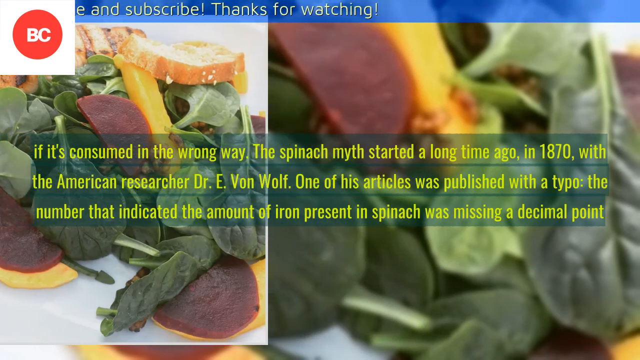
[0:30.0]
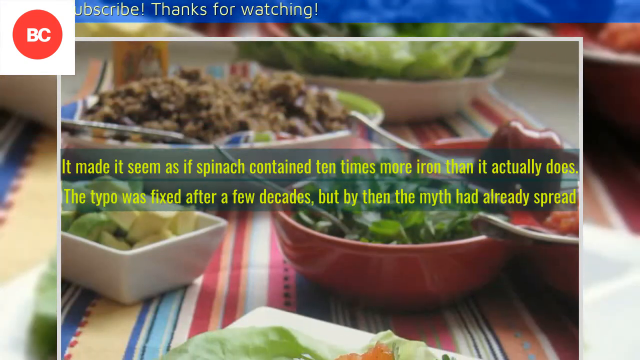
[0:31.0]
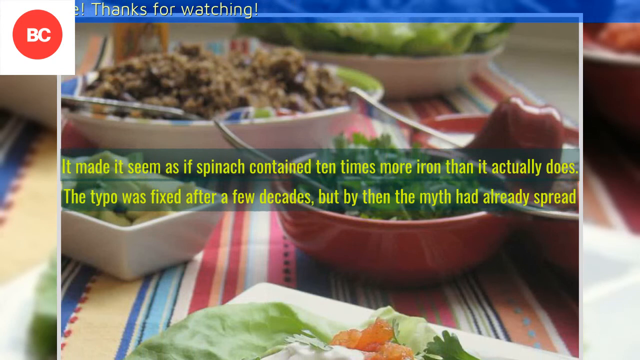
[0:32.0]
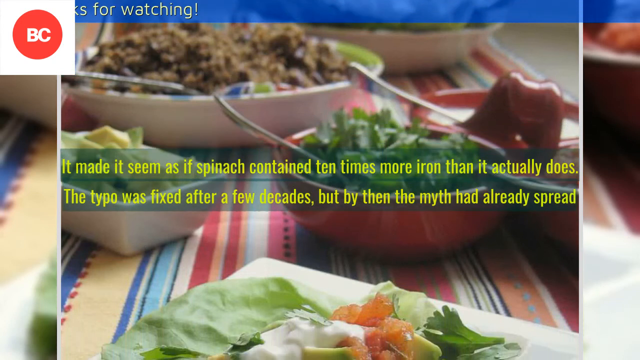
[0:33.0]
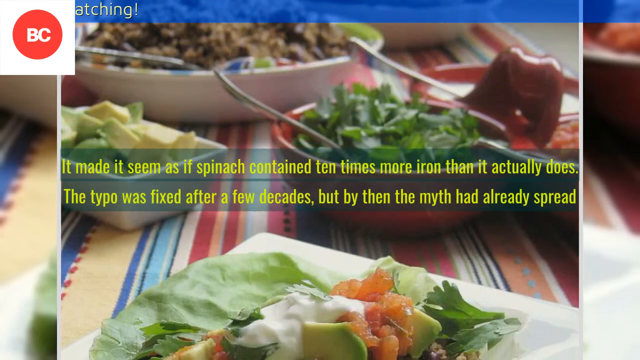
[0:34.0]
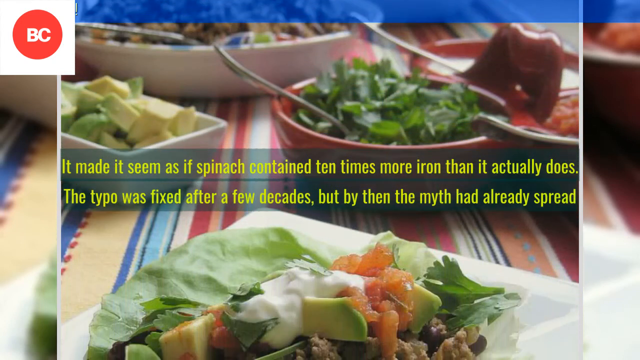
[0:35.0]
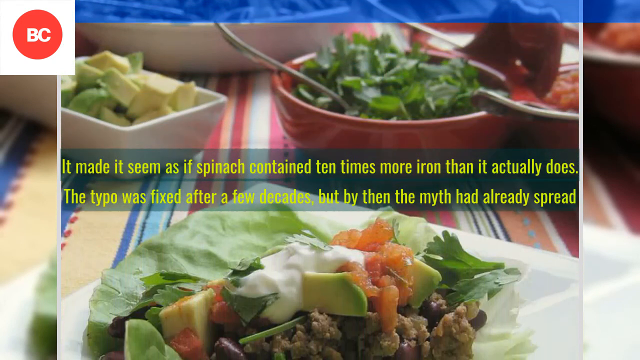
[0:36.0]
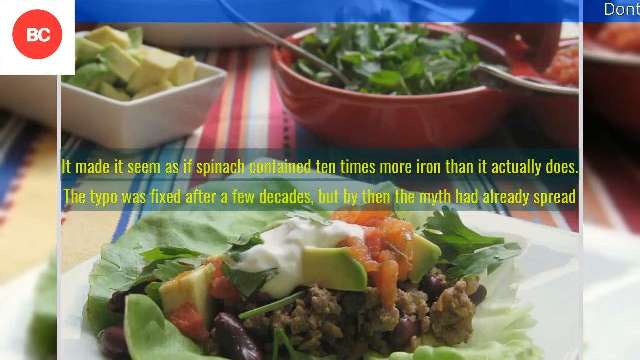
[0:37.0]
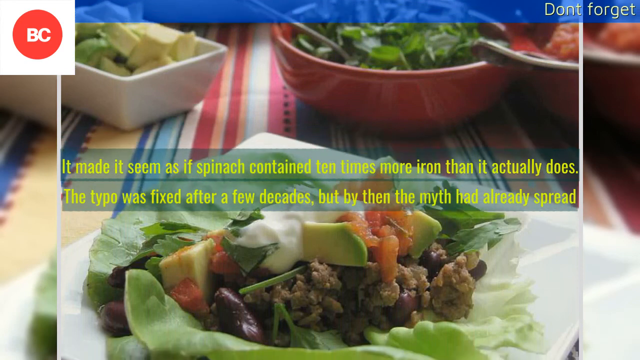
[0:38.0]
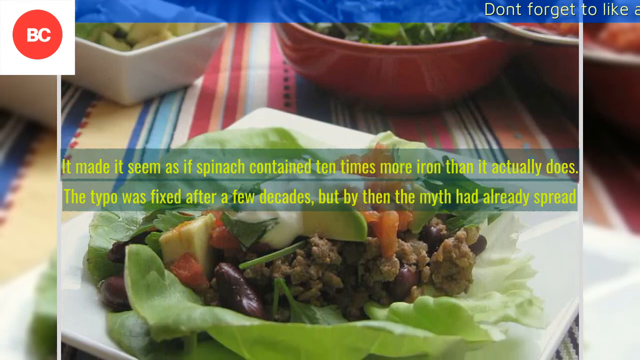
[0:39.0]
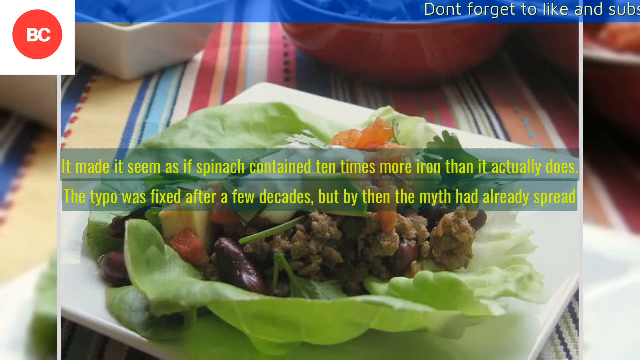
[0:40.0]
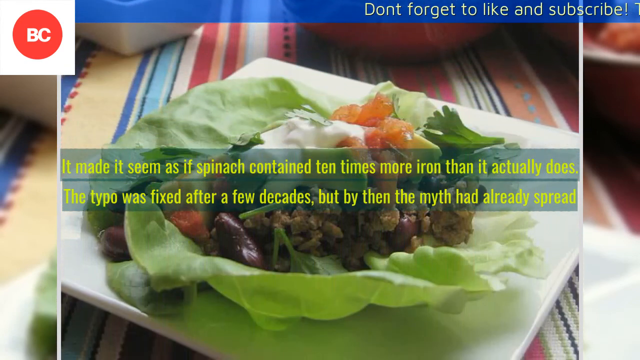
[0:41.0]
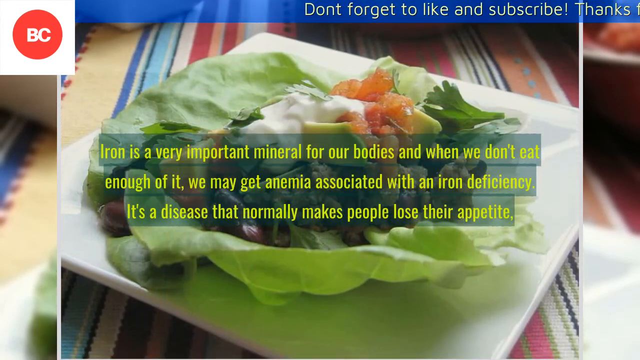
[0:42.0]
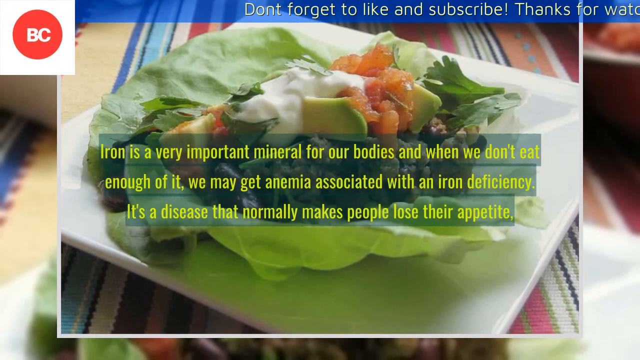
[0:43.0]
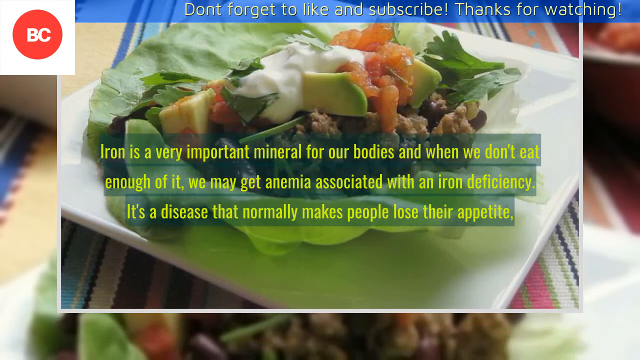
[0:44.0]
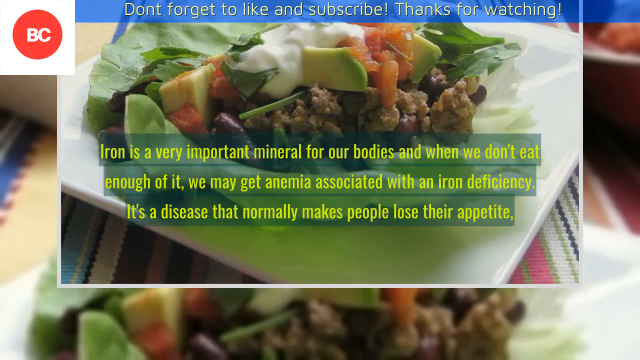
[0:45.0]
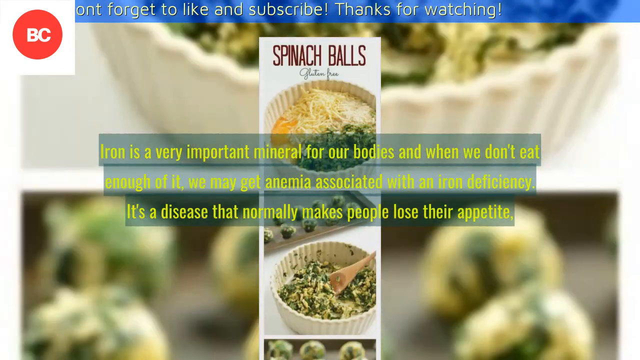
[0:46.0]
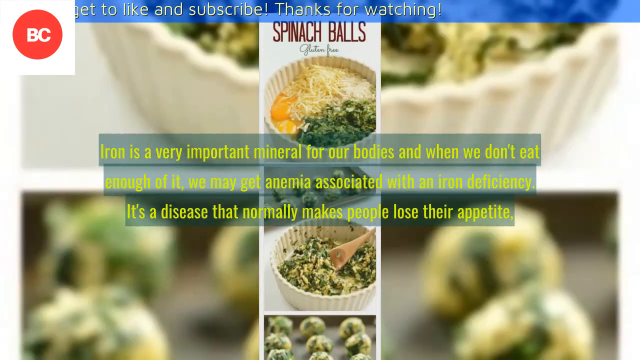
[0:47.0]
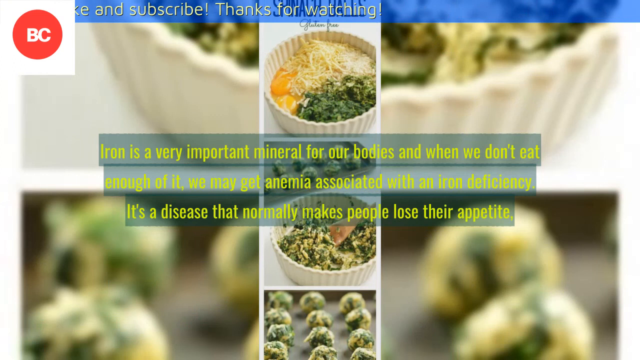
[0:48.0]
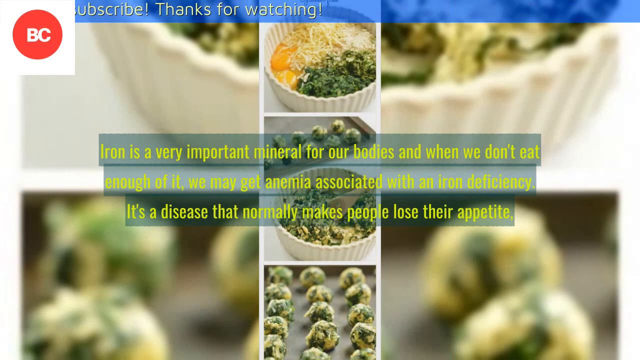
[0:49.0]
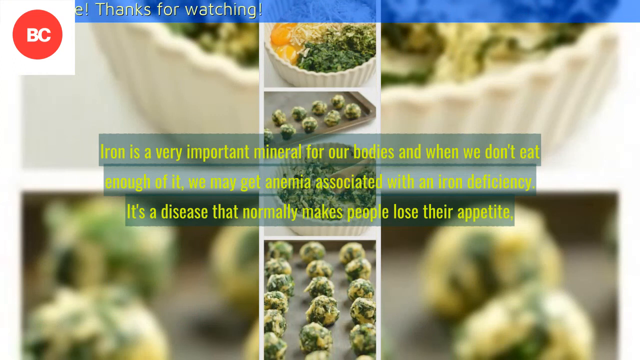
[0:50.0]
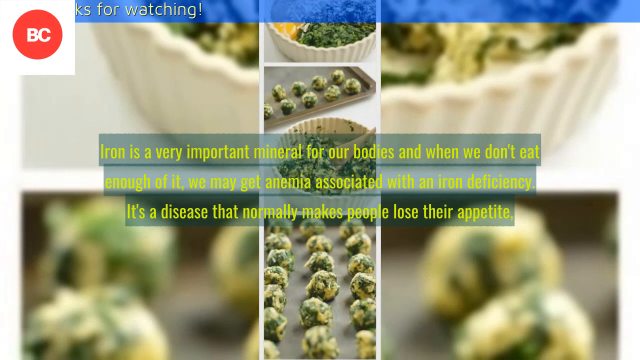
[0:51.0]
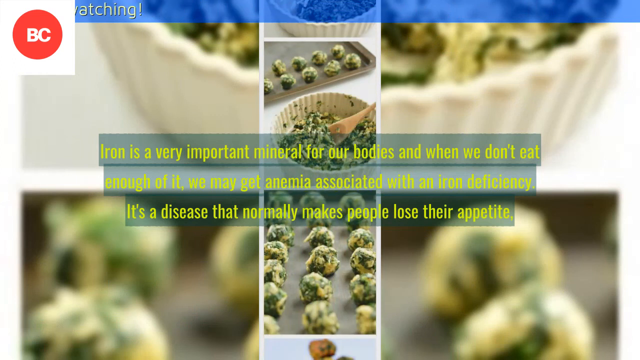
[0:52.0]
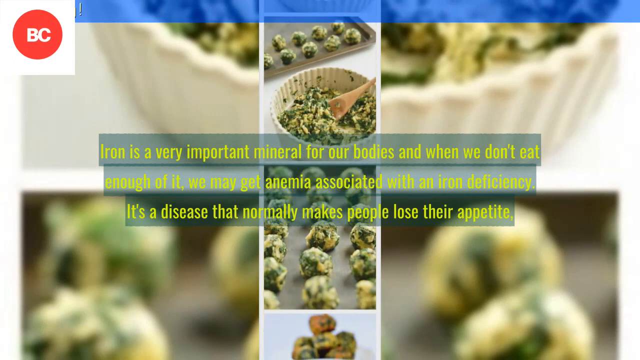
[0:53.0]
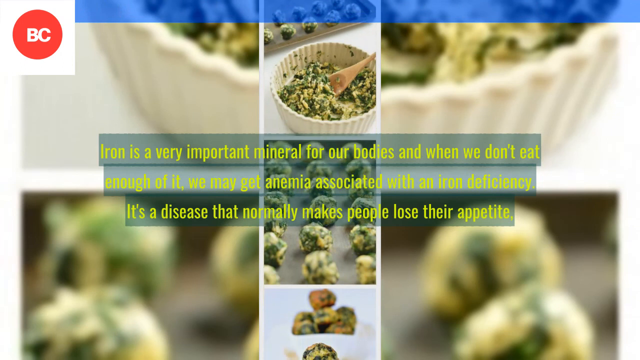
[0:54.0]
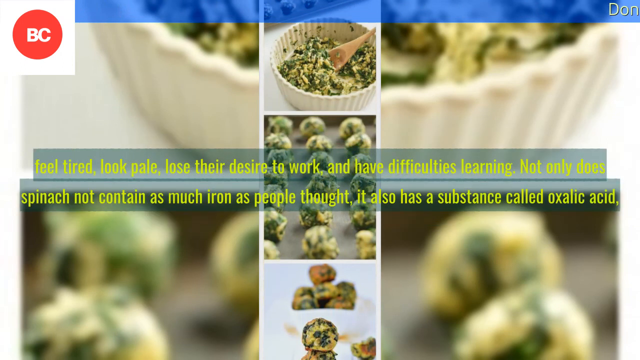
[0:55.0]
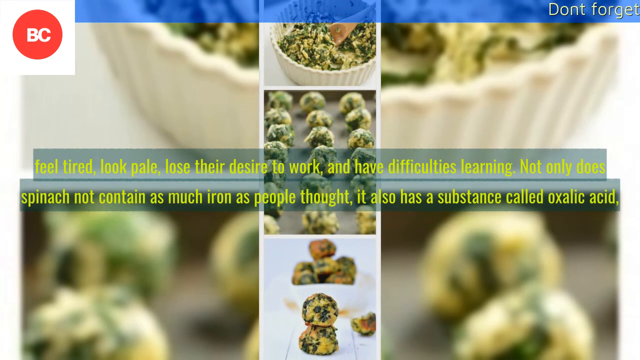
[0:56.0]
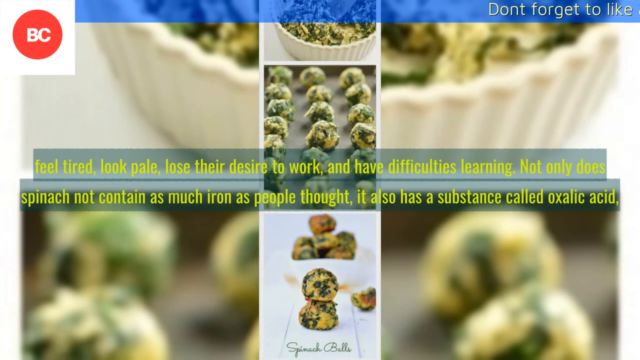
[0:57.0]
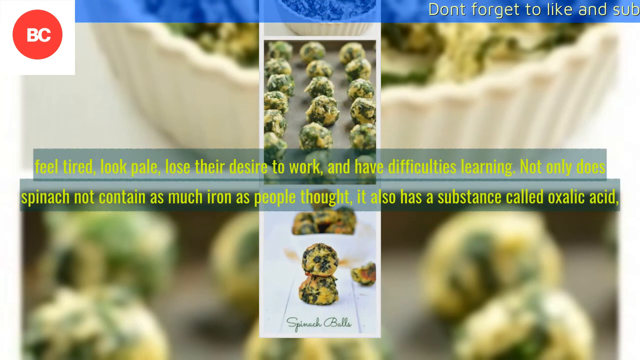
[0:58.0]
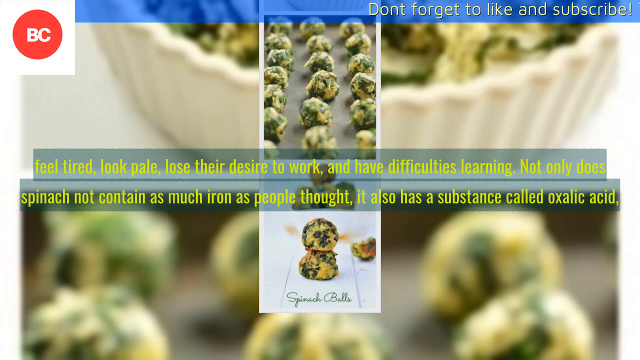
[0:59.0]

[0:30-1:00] An image of a spinach dish is on the far left side of the screen, zoomed out, and on the right side the same dish appears even more zoomed out. Text covers the center of the screen and suddenly switches to a different paragraph. The background image also changes to another spinach dish. The view pans from the top to the bottom of this image, displaying more dishes of different types. There are three bowls: a white bowl, a red bowl and another white plate; as the image pans, it moves from the white bowl and red plate to the white plate. More text appears across the screen about why iron is important. The image changes again to a different dish using spinach, panning from top to bottom and showing different spinach dishes.